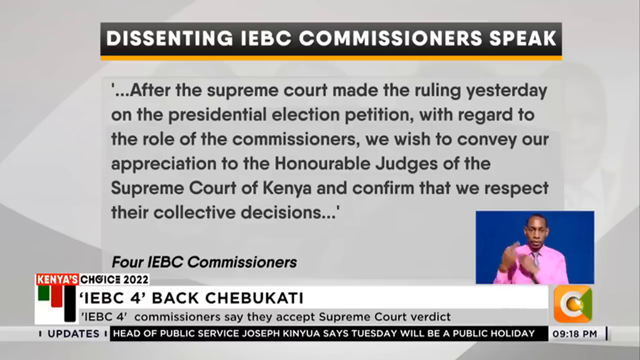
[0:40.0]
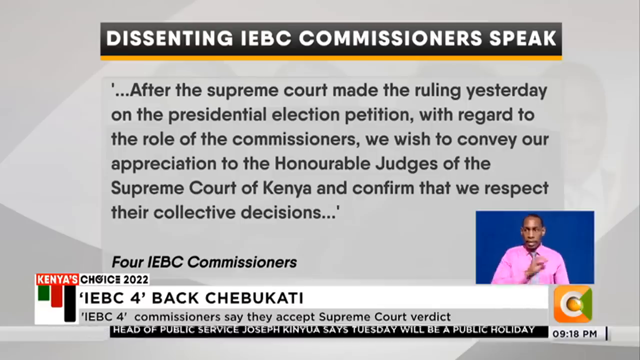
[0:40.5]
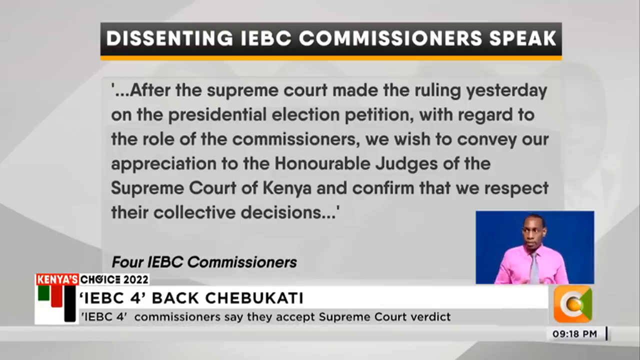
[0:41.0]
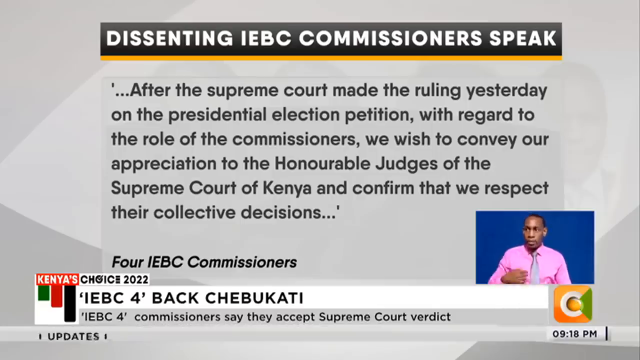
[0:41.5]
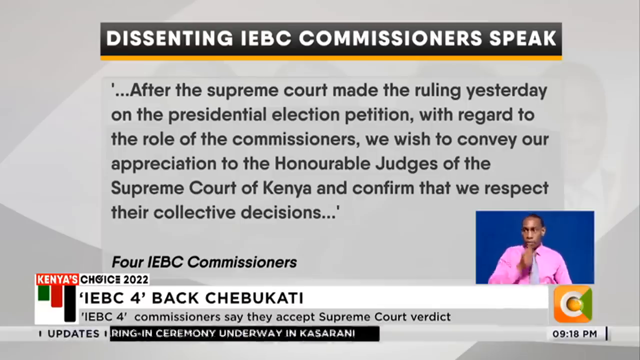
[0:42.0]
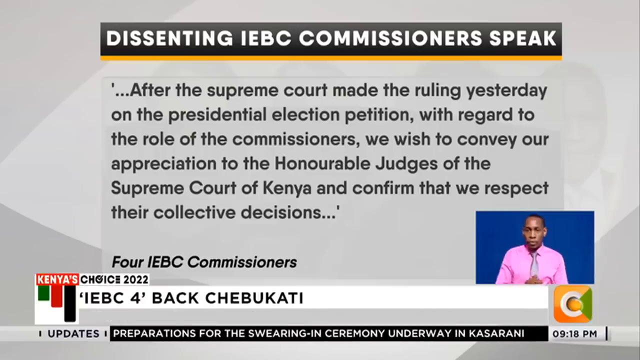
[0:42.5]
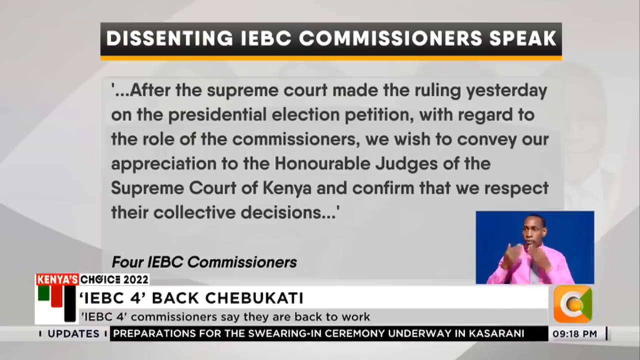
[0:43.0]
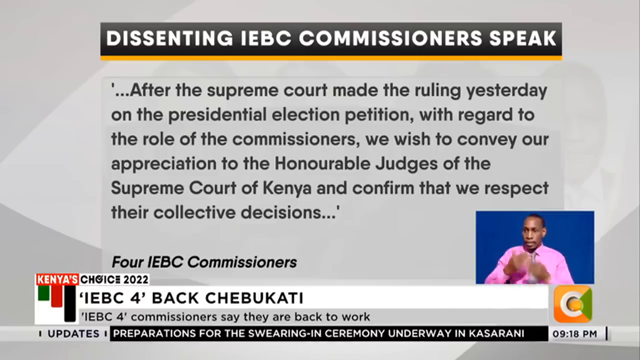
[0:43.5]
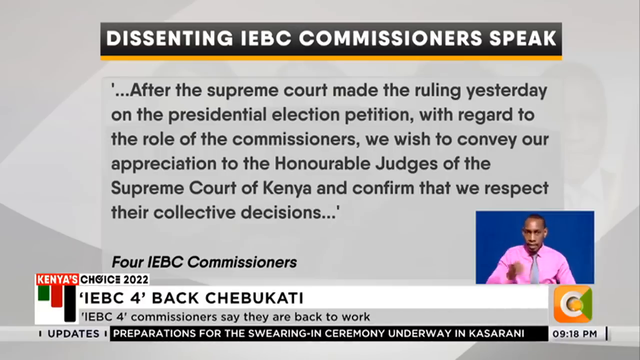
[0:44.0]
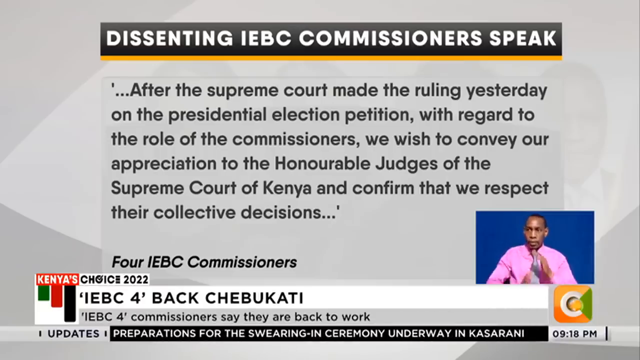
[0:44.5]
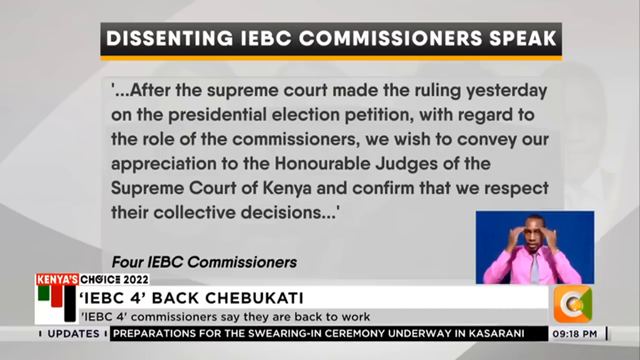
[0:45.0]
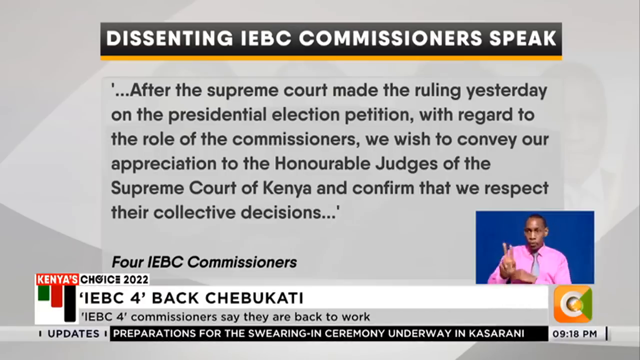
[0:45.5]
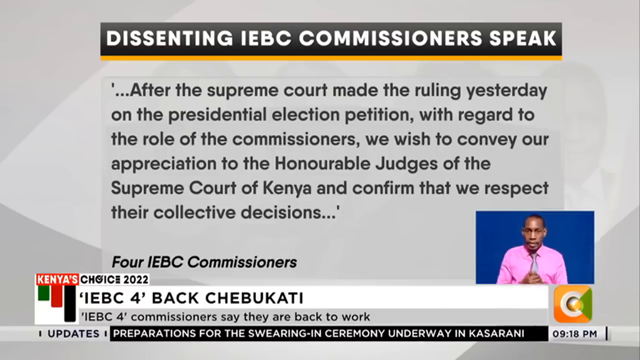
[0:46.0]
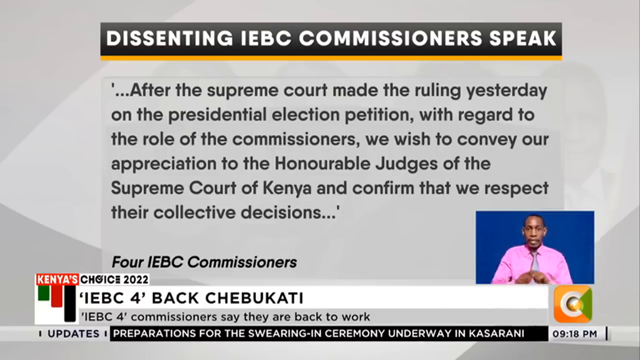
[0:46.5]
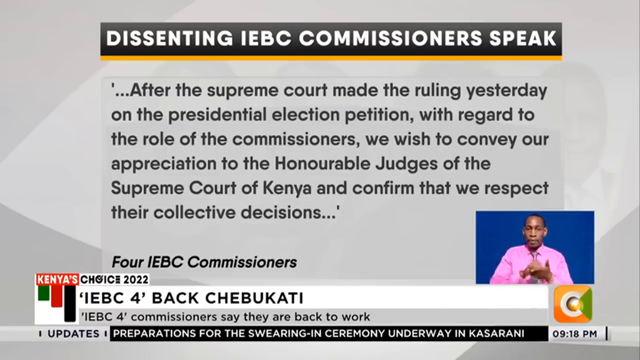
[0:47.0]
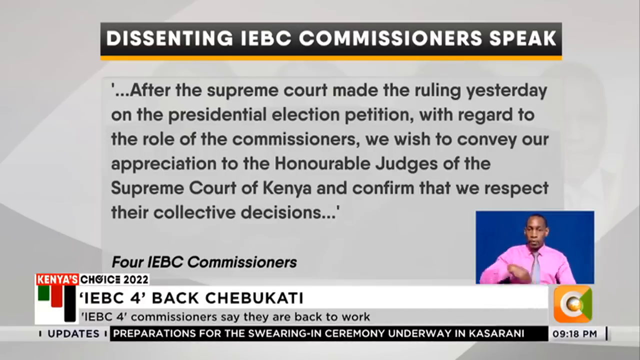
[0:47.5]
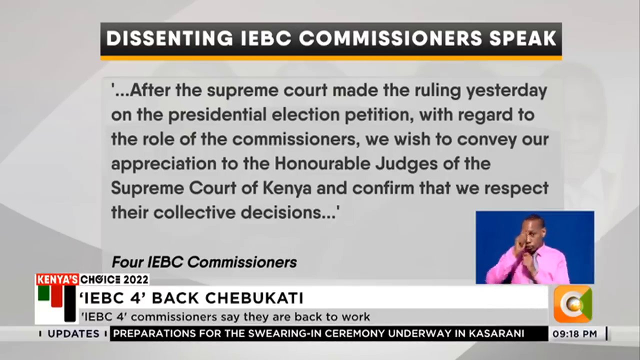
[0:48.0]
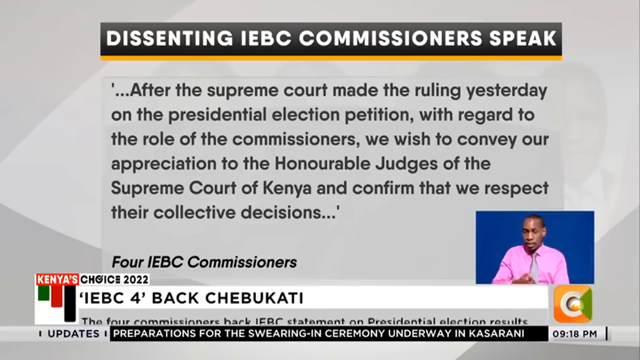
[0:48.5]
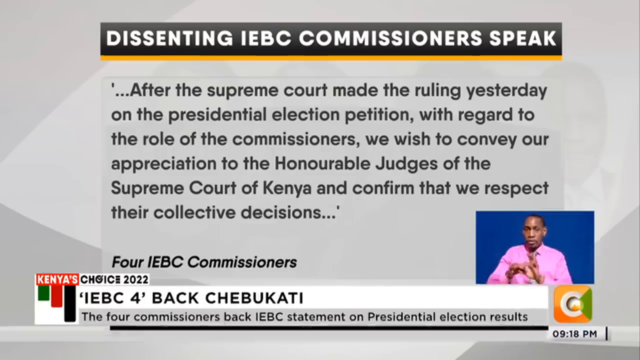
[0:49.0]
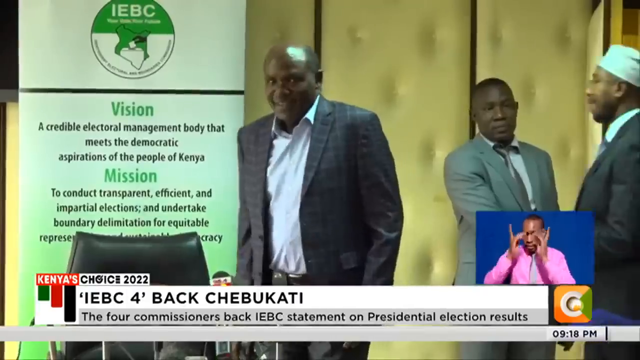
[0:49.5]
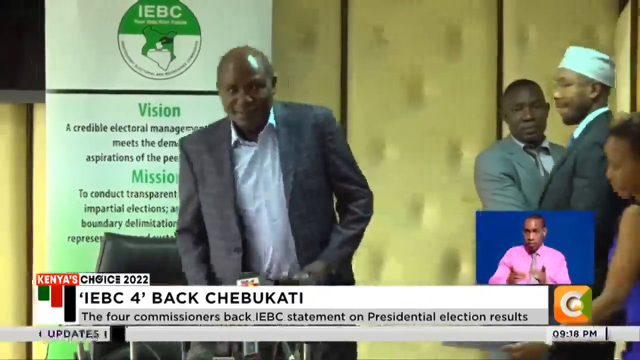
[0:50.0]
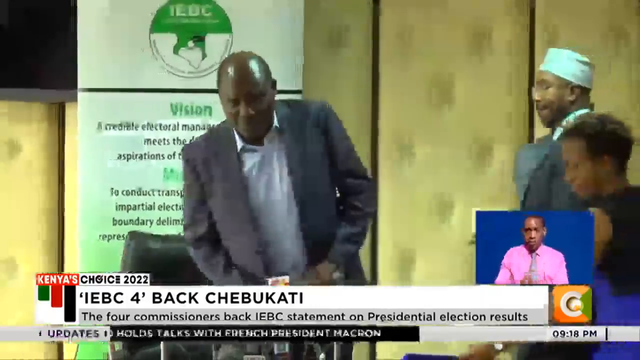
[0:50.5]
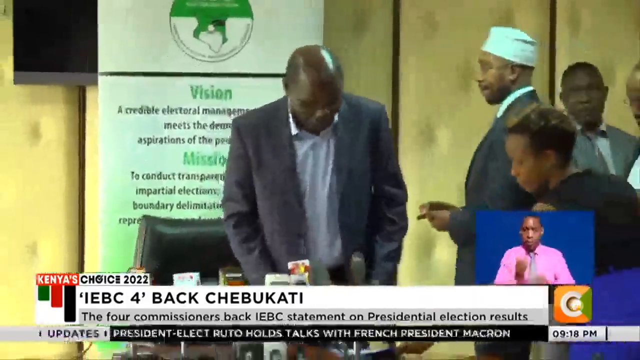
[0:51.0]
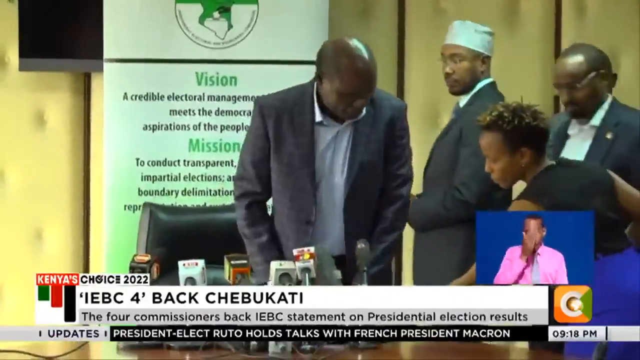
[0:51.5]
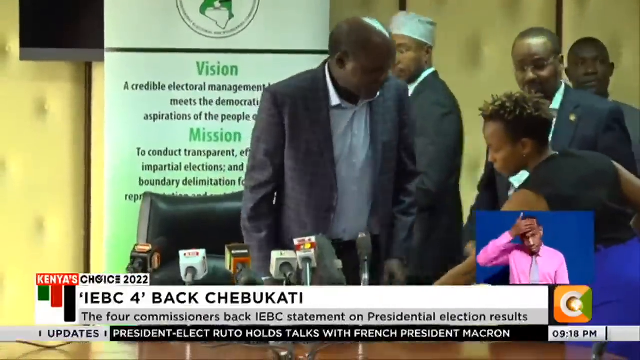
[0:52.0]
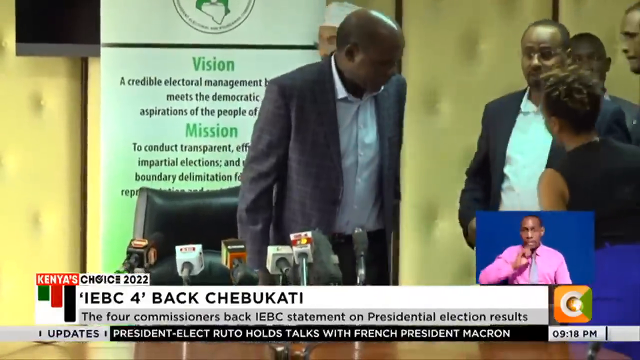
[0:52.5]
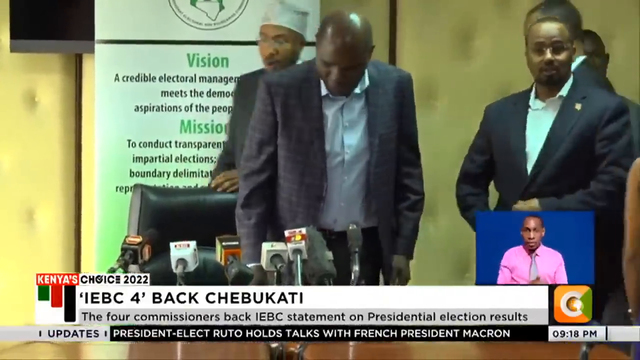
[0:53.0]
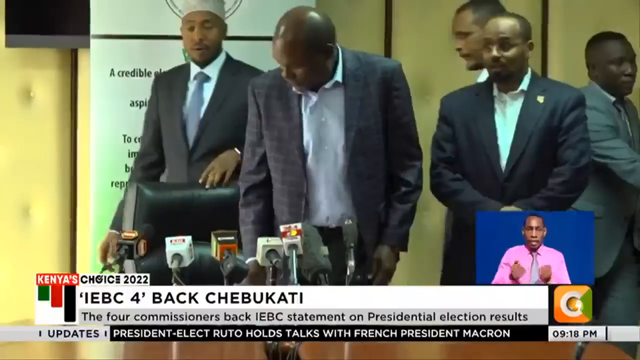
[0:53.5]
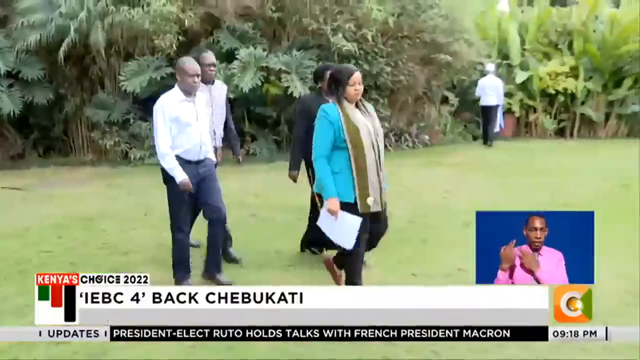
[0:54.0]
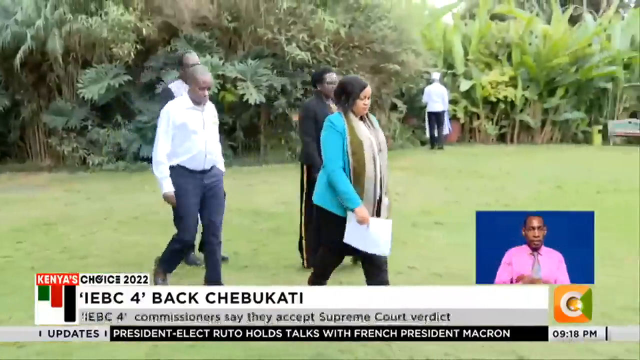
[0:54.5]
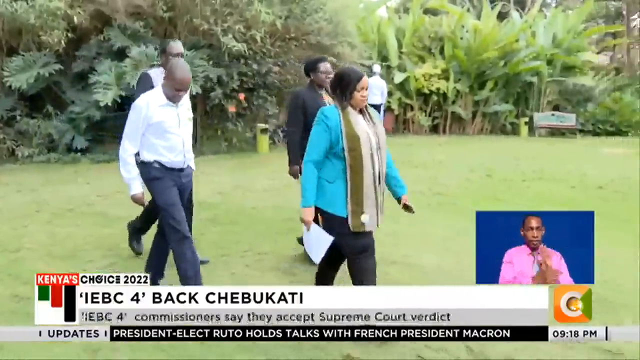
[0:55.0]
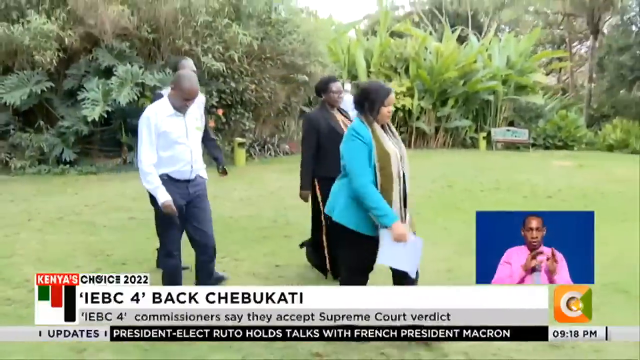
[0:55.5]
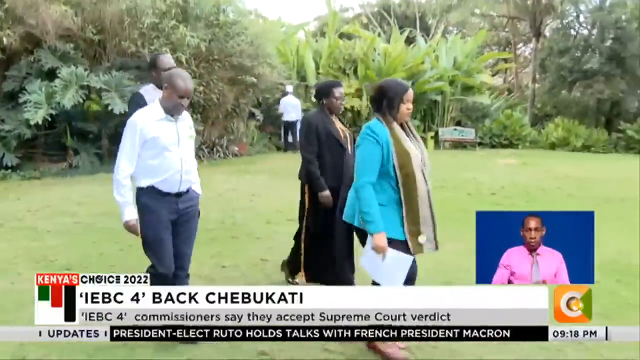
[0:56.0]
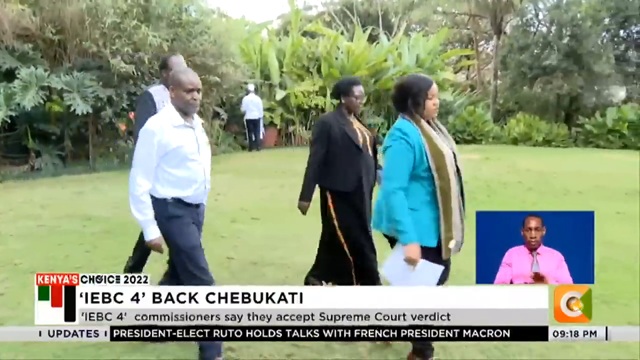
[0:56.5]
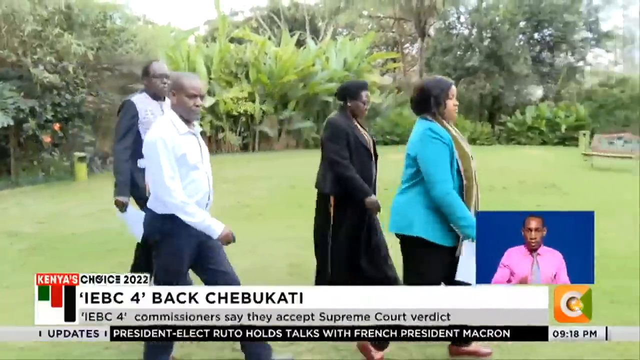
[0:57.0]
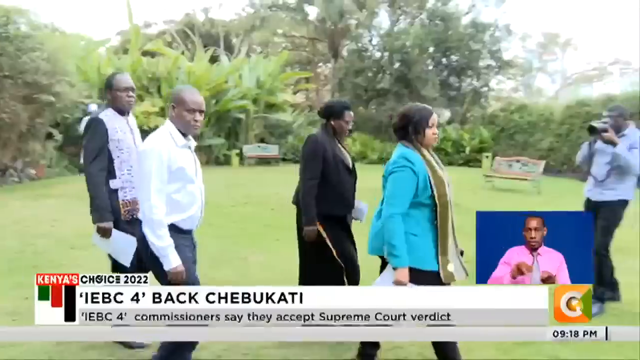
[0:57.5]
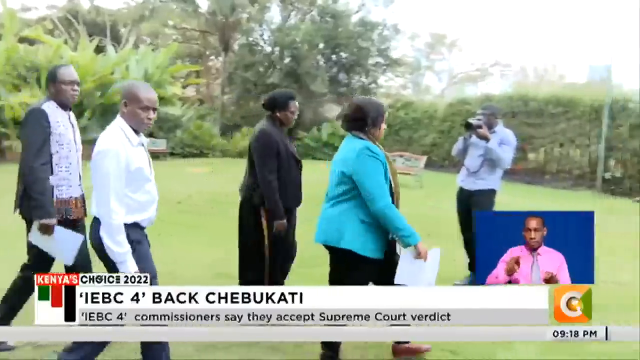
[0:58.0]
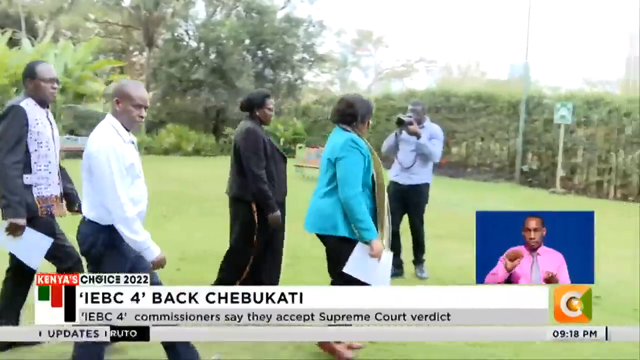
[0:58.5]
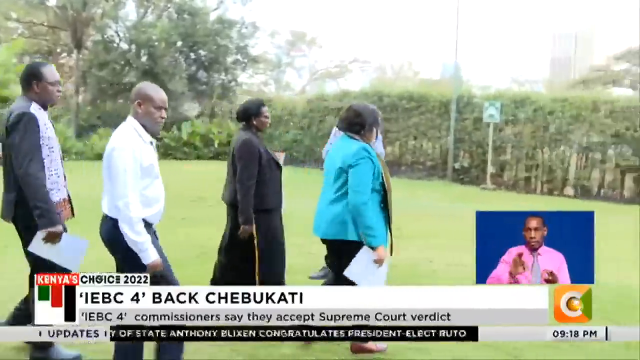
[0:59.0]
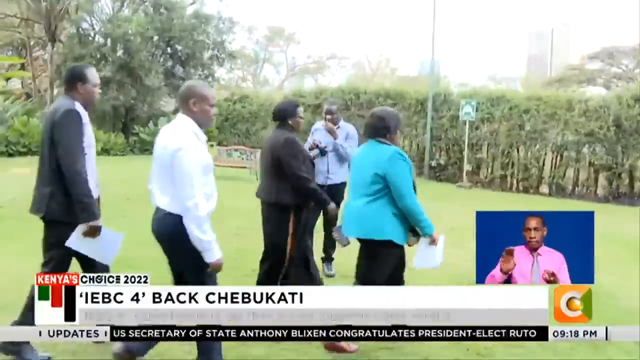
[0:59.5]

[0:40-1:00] The news report shows a quote that appears to be attributed to "4 IEBC commissioners," apparently the four people seen side by side. The report then shows more footage of them walking in the same yard, and nothing new happens in the footage, though it seemingly goes on a bit longer. Besides the lady in turquoise, the other three commissioners are a lady in a long black robe, a man in a white shirt or white vest, and a man at the back left wearing some sort of white scarf with a black suit.